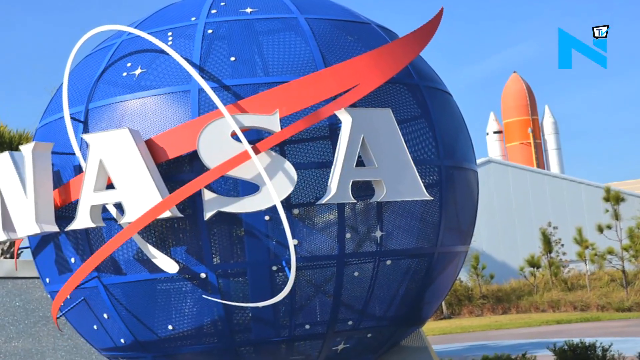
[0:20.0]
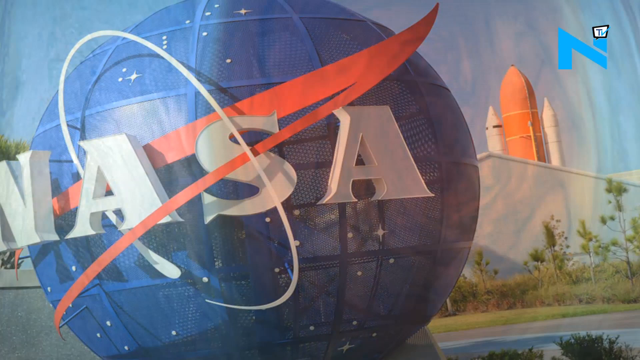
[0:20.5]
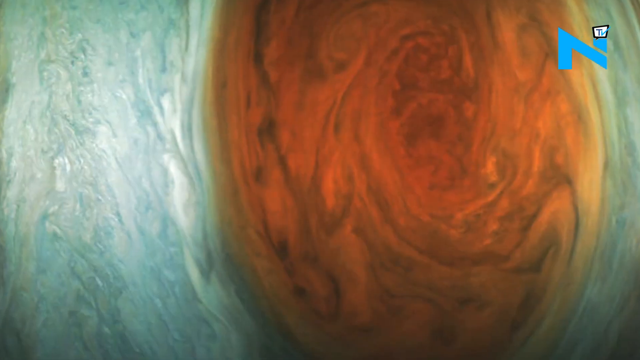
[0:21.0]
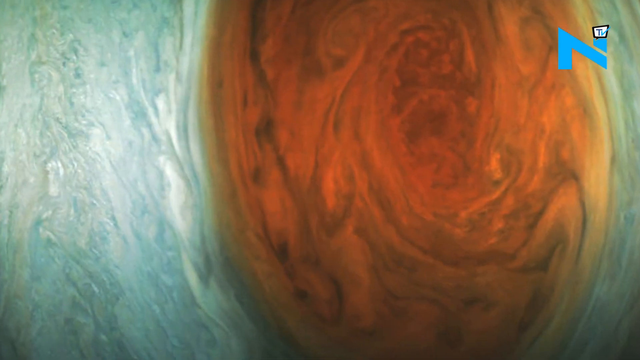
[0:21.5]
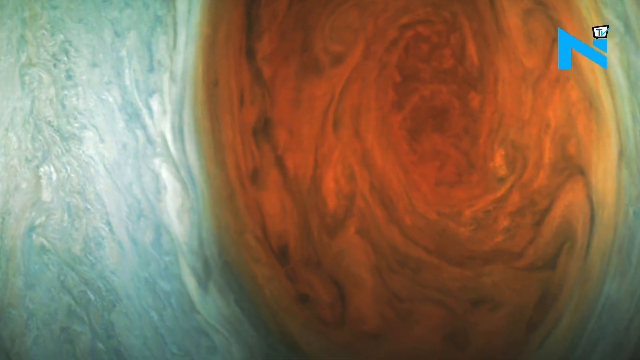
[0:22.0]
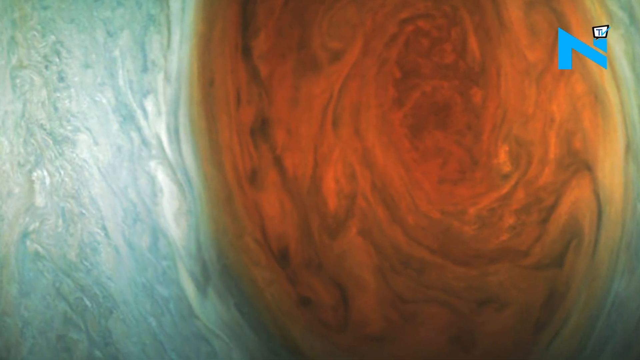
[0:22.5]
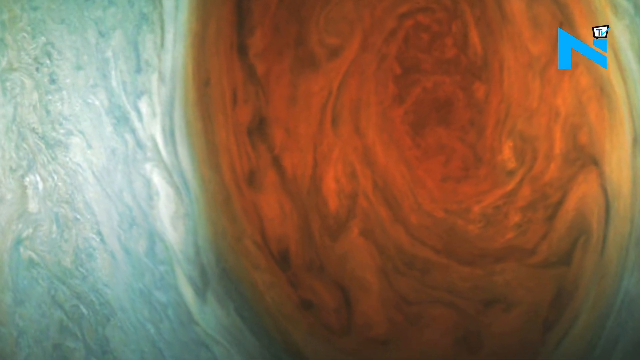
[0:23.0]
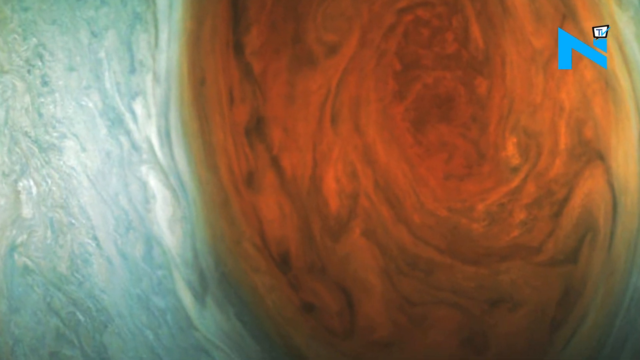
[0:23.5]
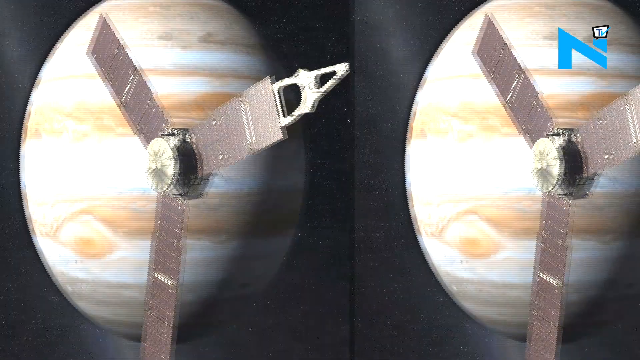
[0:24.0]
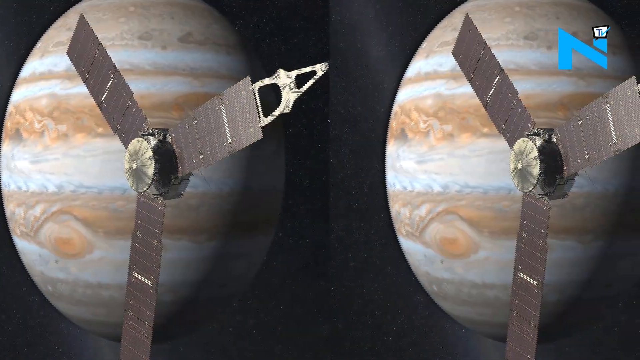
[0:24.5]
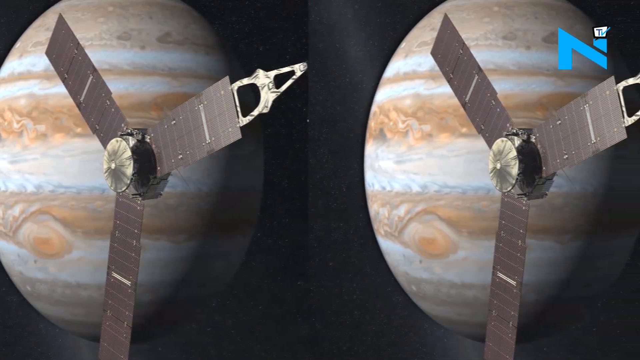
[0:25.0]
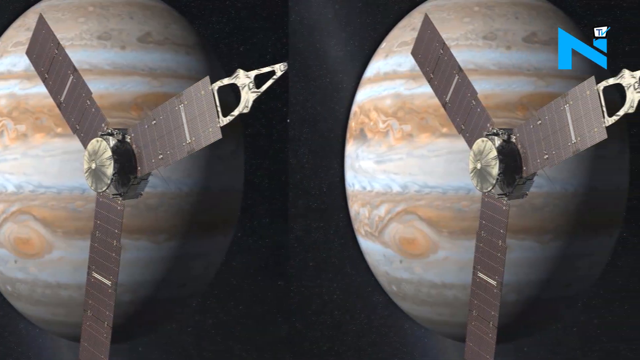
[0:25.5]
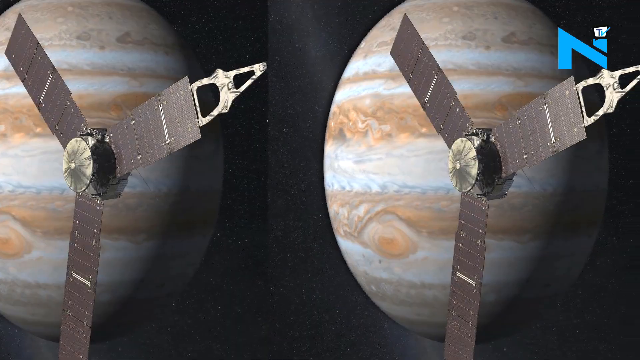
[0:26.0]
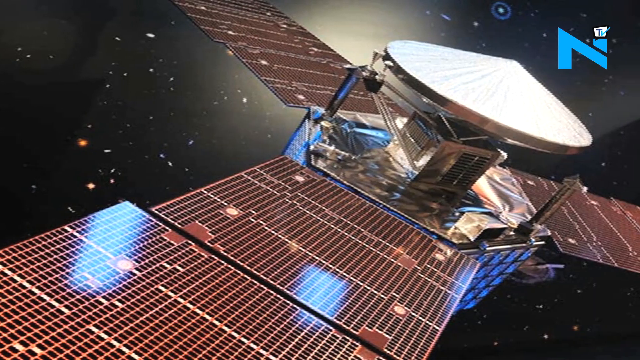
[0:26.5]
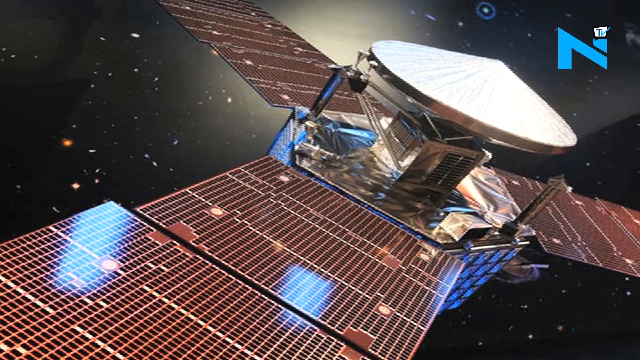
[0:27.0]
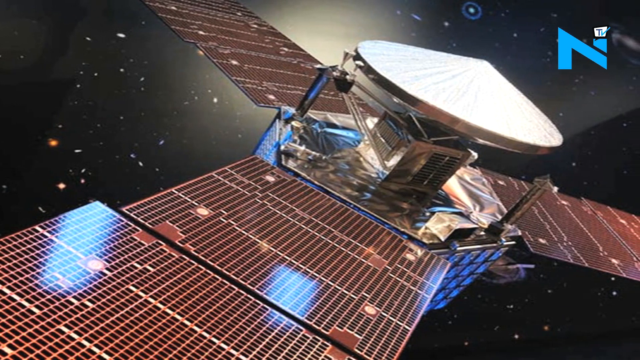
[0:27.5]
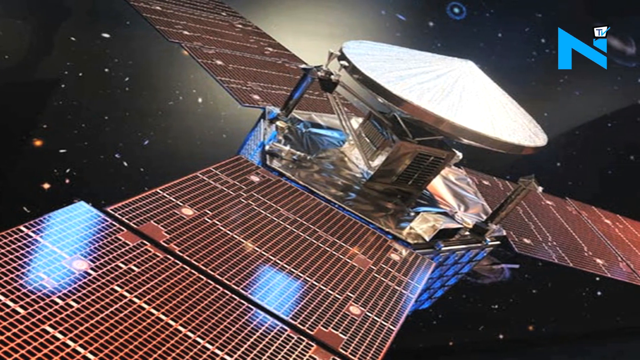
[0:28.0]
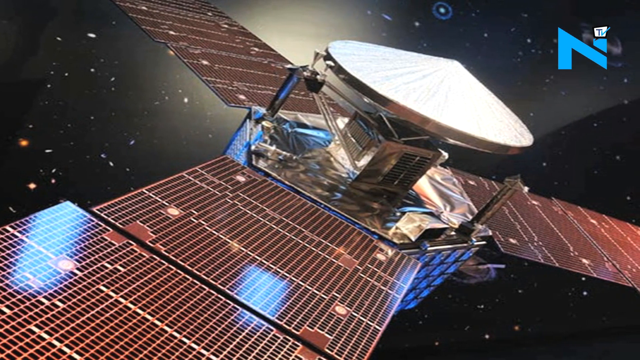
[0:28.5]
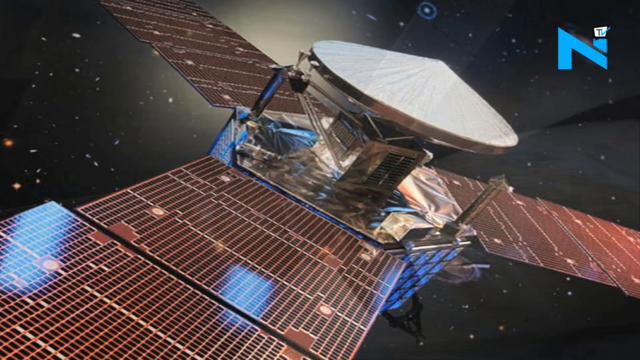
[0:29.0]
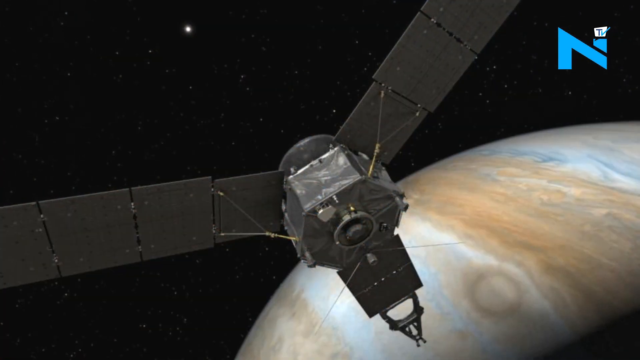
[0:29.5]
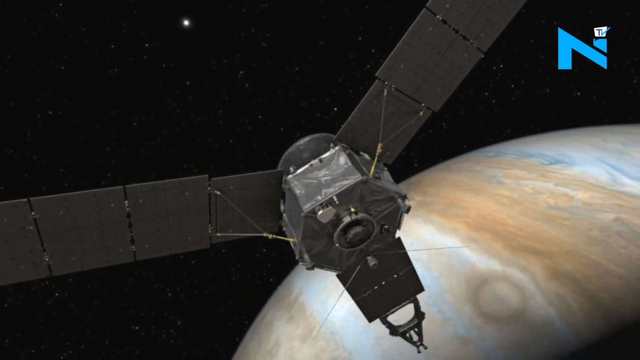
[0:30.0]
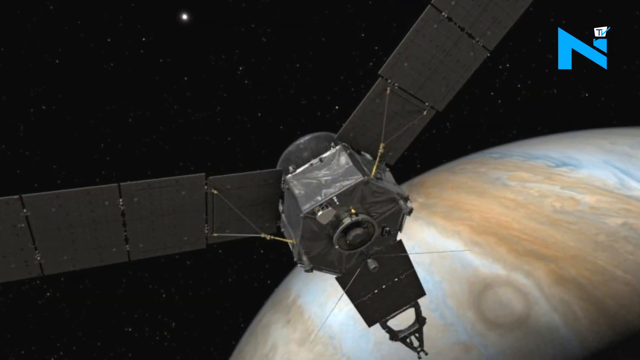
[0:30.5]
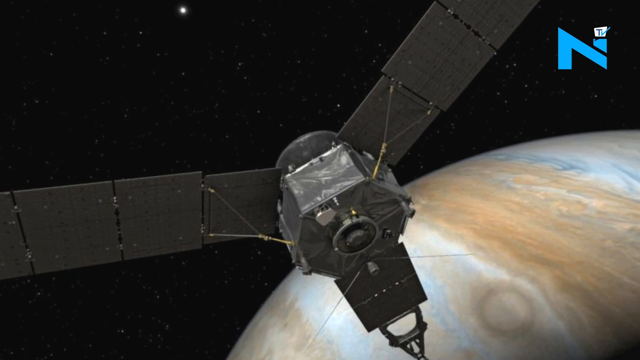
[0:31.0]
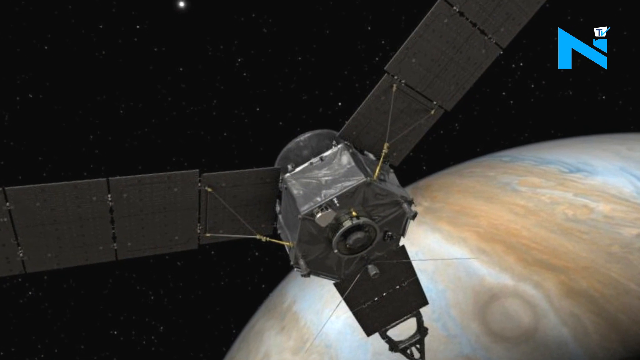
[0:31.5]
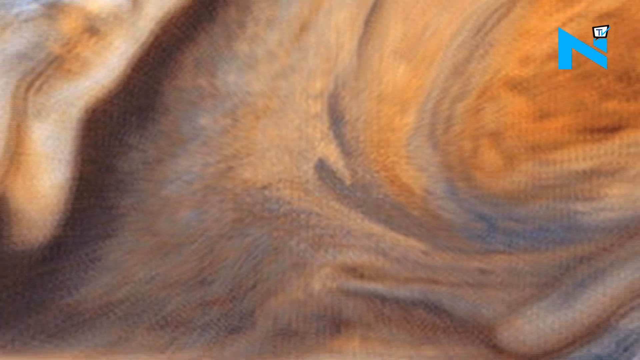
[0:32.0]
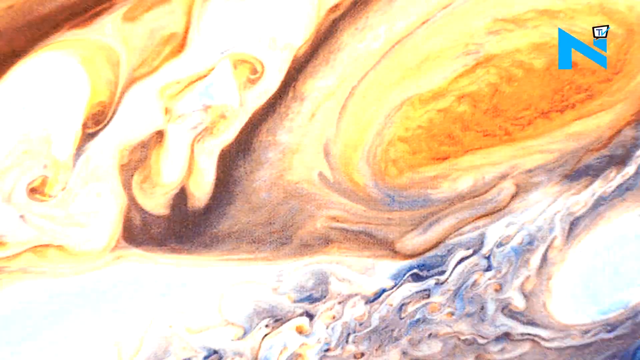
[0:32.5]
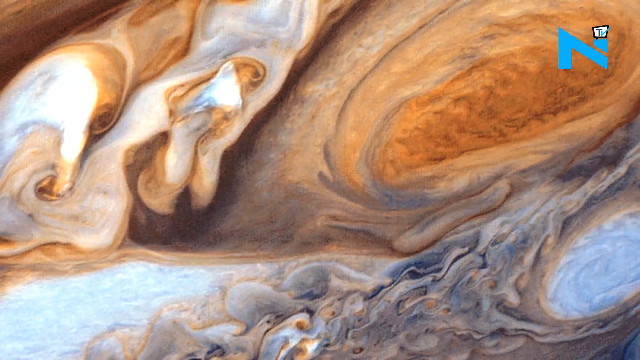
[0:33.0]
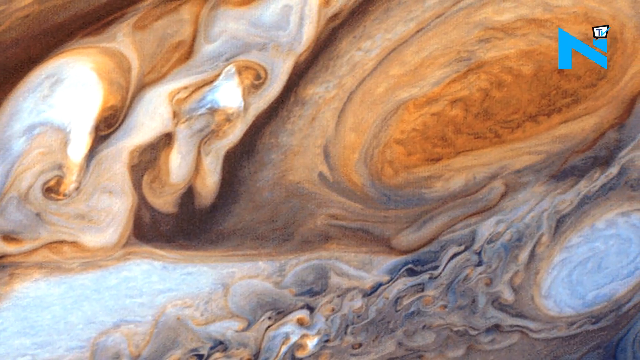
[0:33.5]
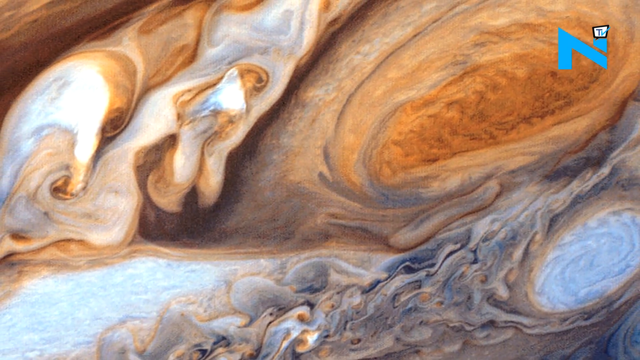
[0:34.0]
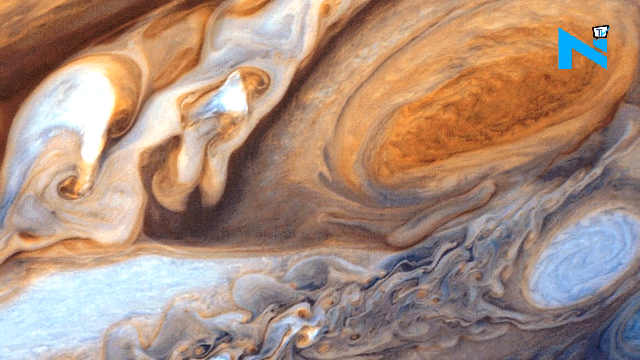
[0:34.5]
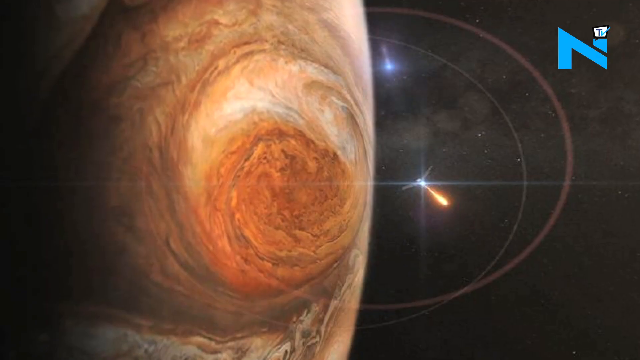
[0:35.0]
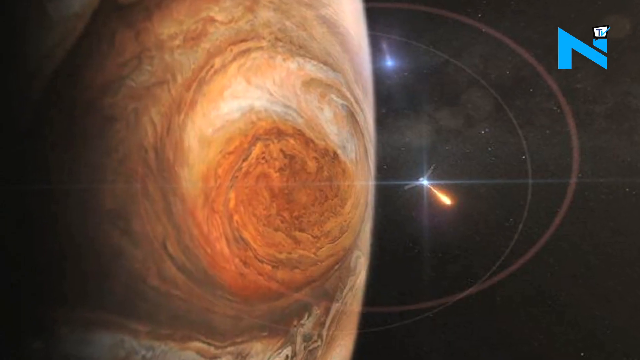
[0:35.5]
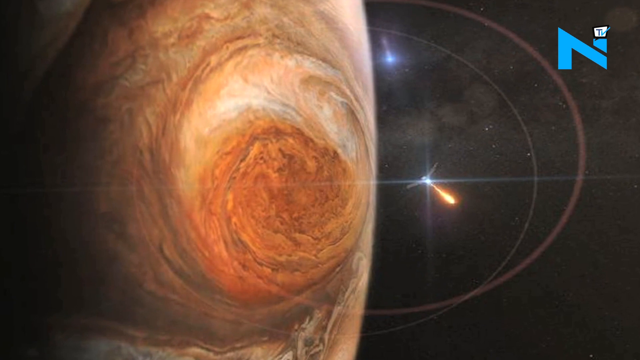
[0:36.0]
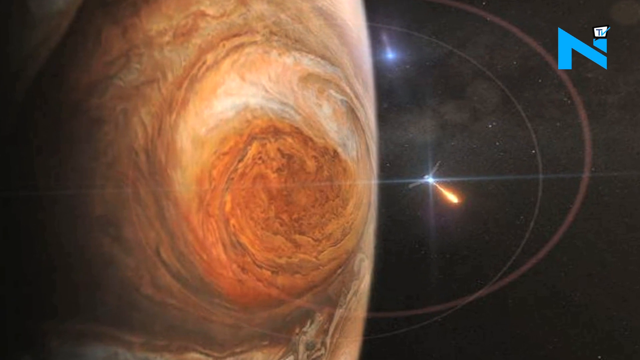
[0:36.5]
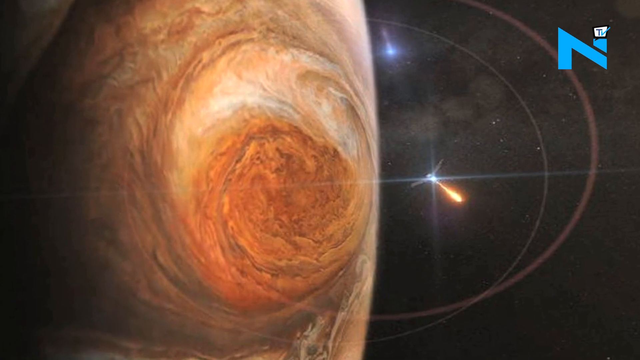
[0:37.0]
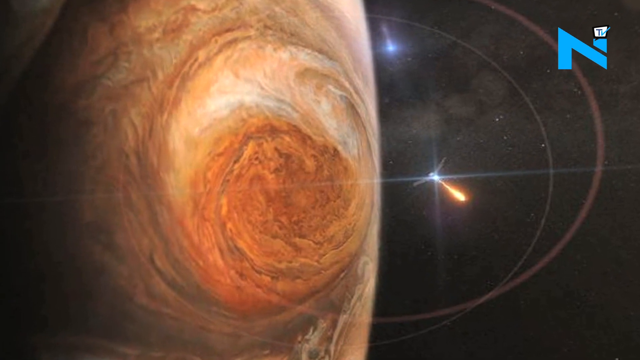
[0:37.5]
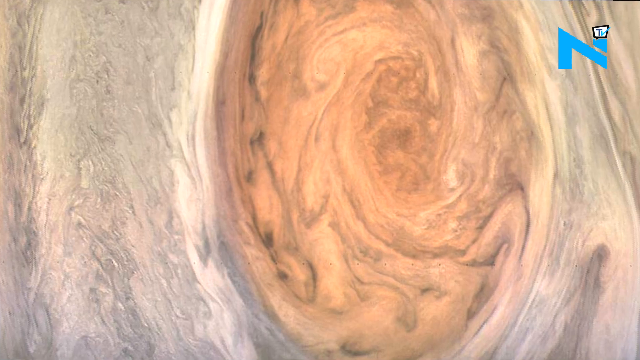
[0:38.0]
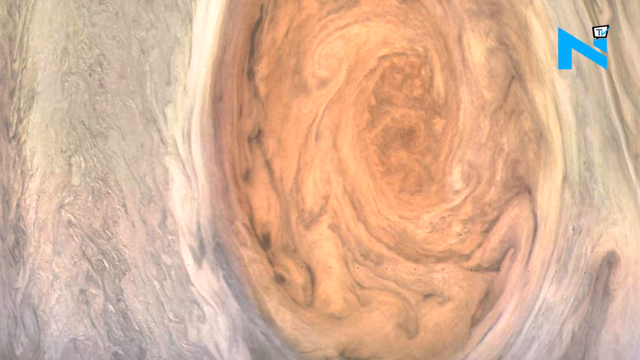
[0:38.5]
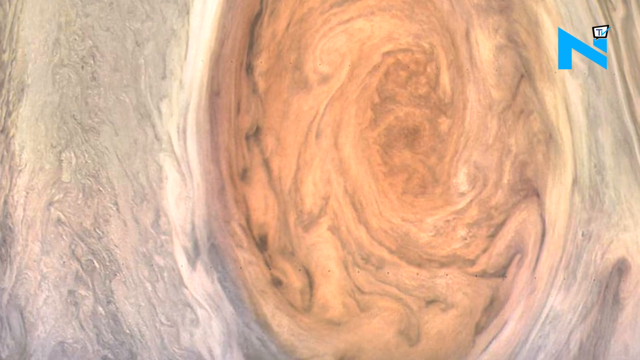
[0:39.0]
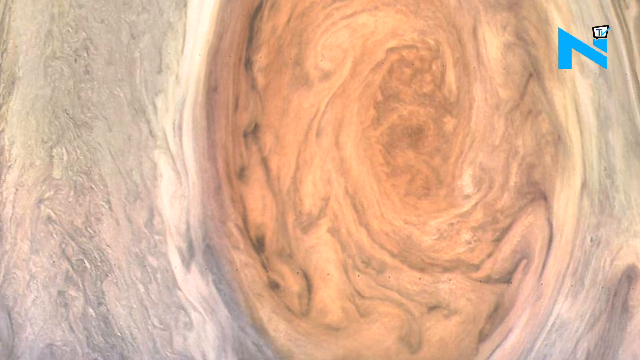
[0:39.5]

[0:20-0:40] A 3D illustration shows the front of a NASA building with a large NASA globe and a NASA logo on it. Next comes a large mass that looks like a reddish swirling circle surrounded with rain. It is a still image, not animated; only the camera angle changes. The camera pans closer, and two identical images appear side by side, each showing the large planet Jupiter with a three-winged satellite flying across the side of the planet. Next is a close-up view of the three-winged satellite, its wings a copper shade against the grey background of space dotted with stars. The camera pans to the right, showing another angle of the three-winged satellite, with Jupiter in the lower right corner of the image. More views of the surface of Jupiter follow.